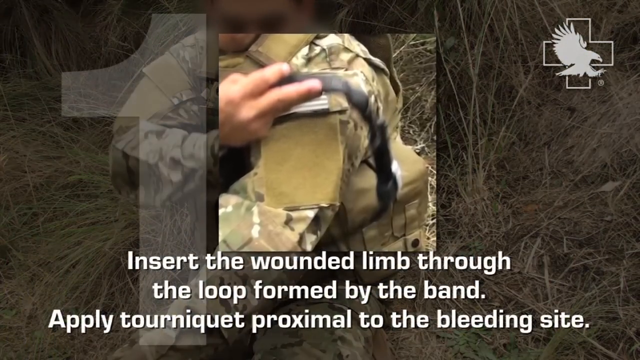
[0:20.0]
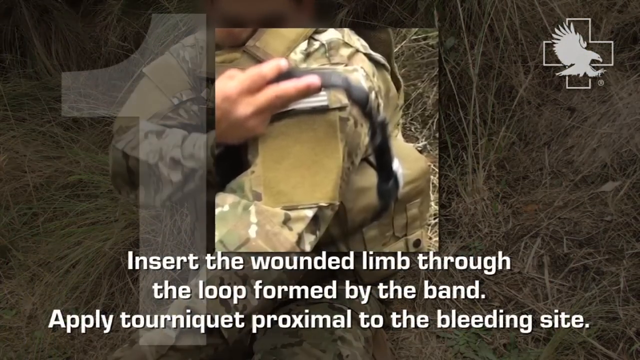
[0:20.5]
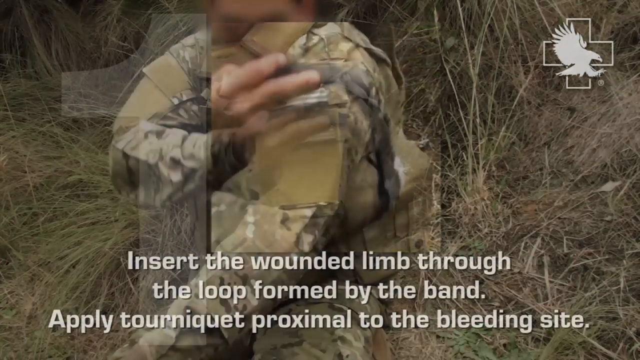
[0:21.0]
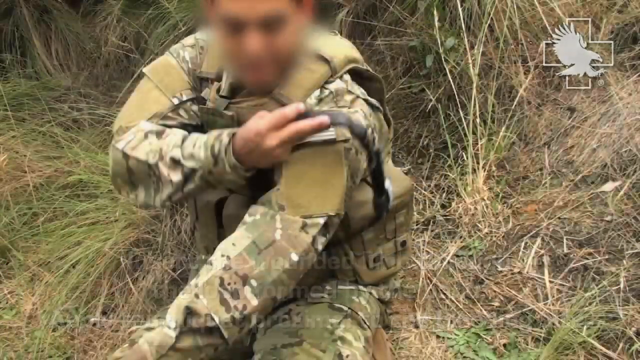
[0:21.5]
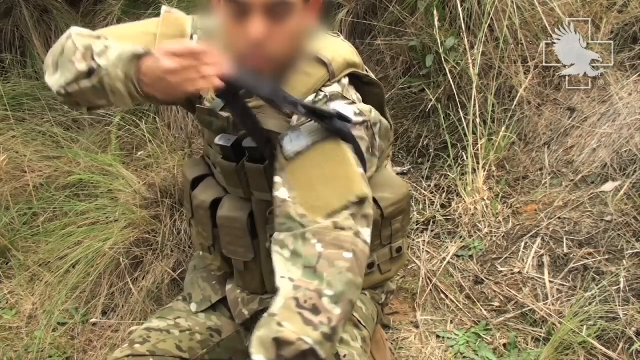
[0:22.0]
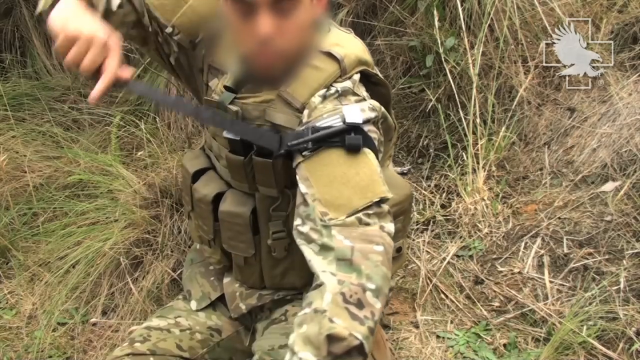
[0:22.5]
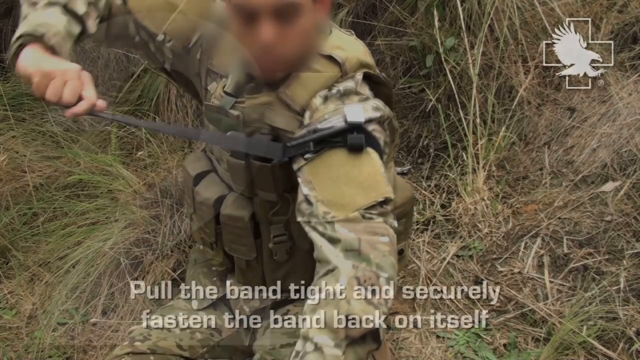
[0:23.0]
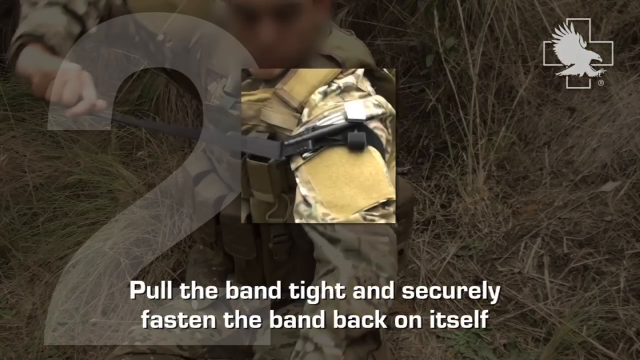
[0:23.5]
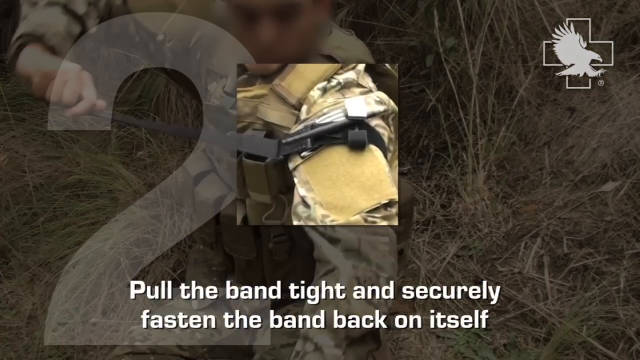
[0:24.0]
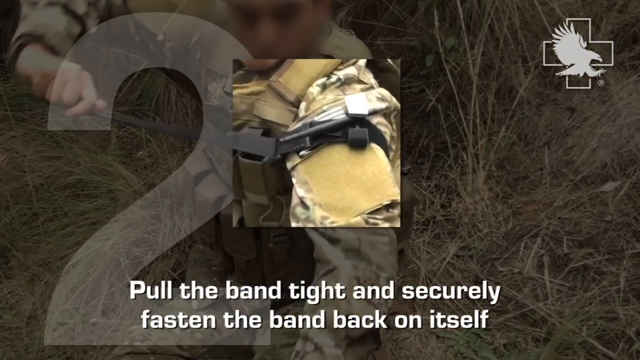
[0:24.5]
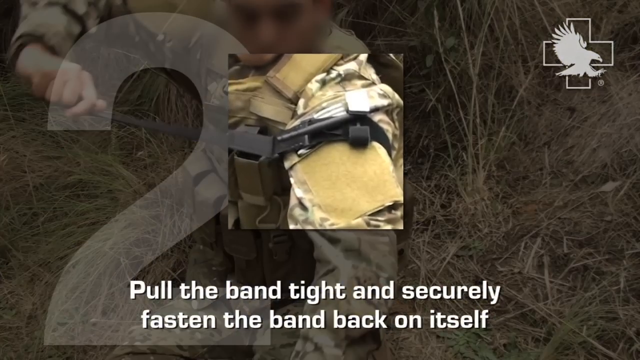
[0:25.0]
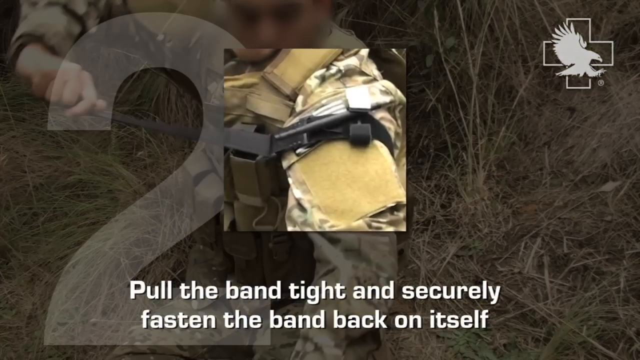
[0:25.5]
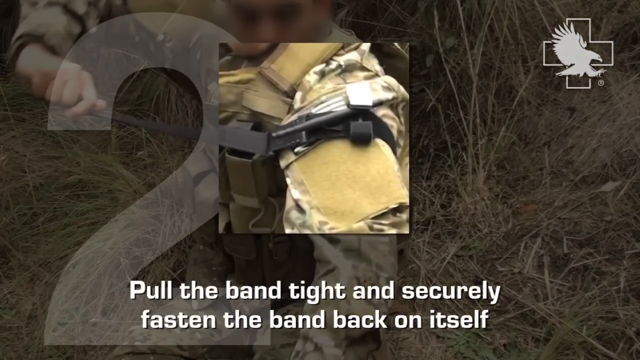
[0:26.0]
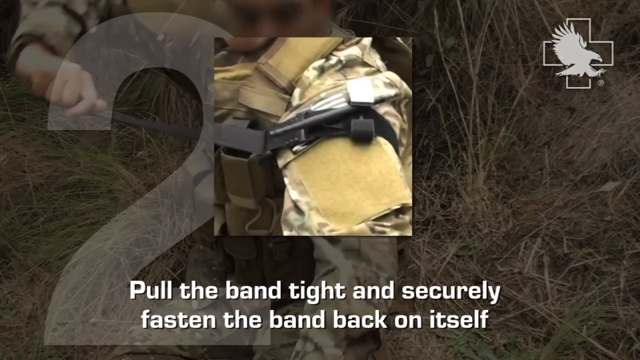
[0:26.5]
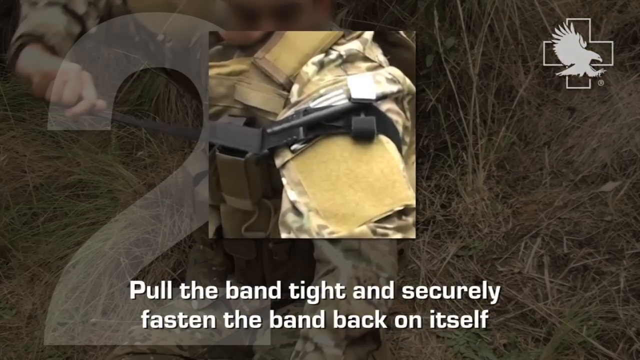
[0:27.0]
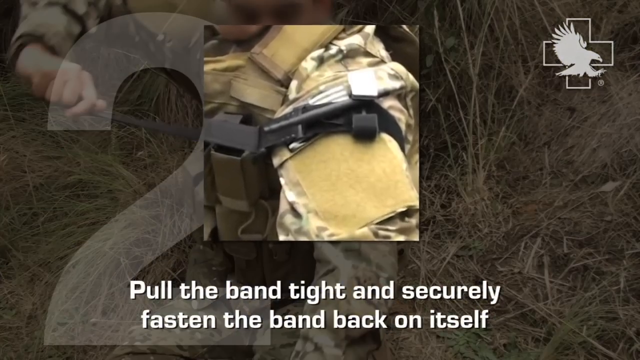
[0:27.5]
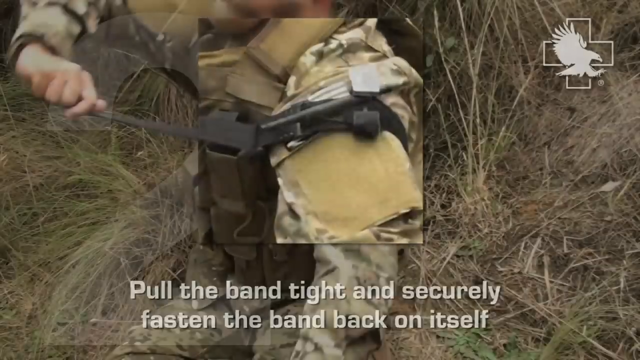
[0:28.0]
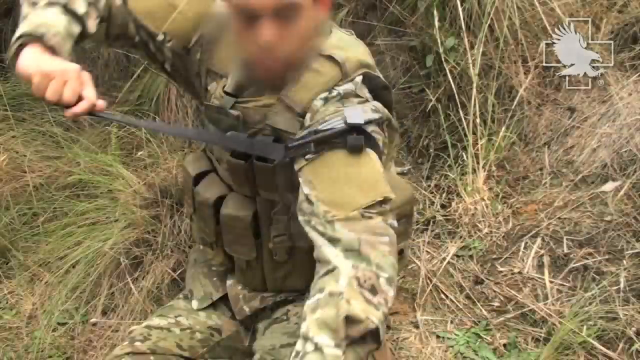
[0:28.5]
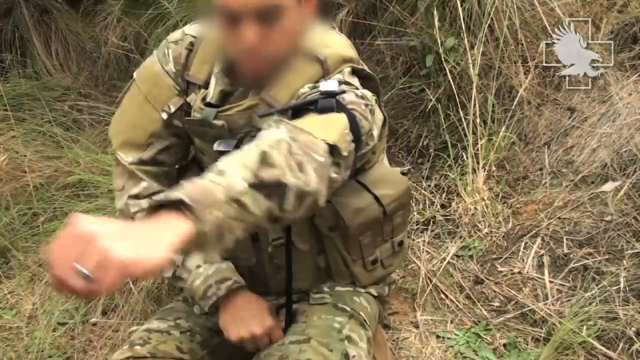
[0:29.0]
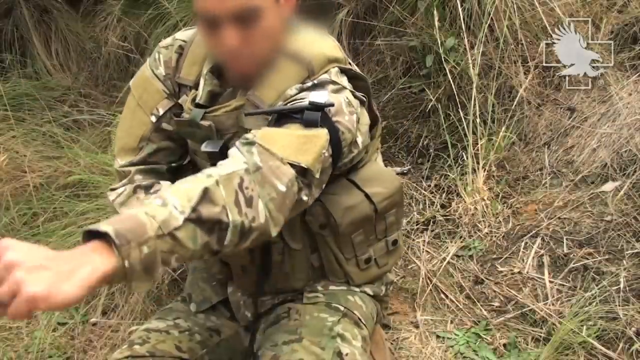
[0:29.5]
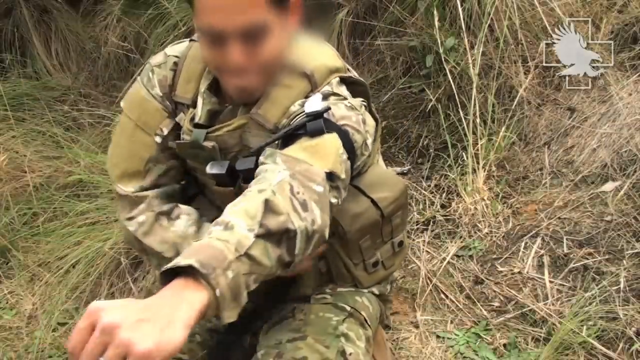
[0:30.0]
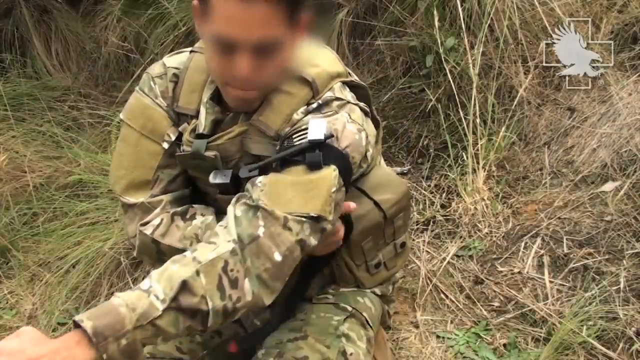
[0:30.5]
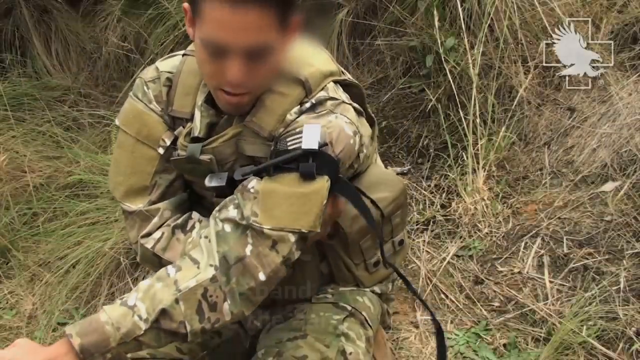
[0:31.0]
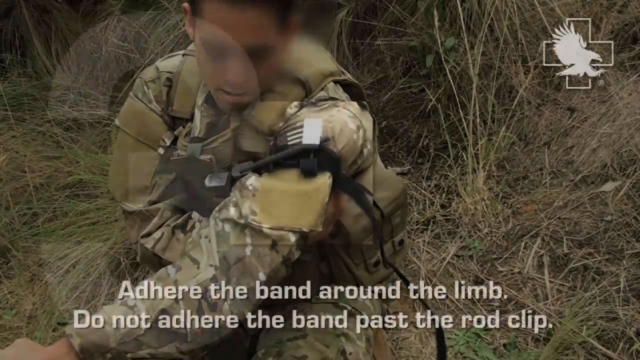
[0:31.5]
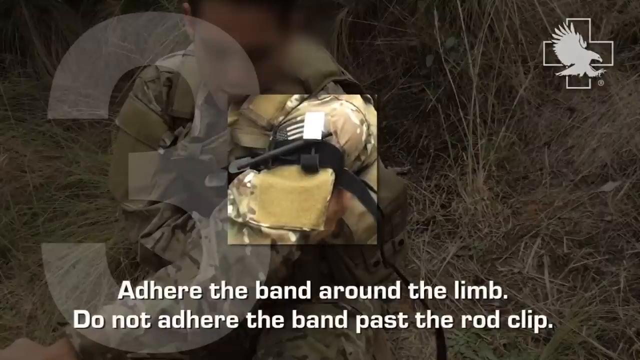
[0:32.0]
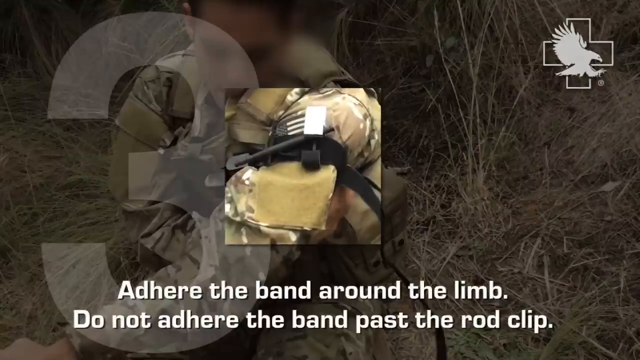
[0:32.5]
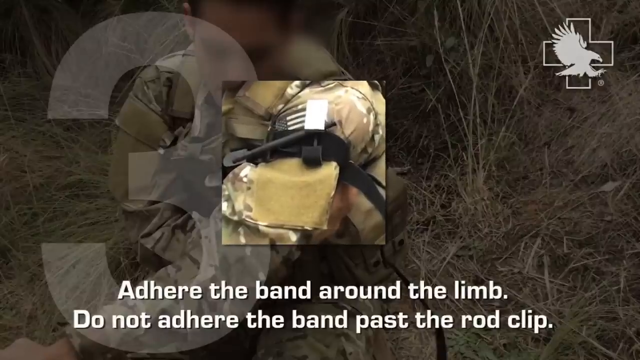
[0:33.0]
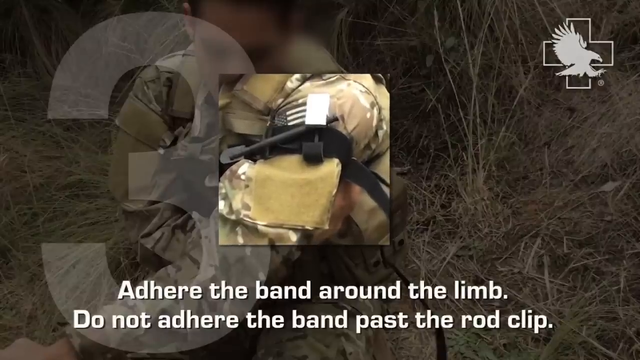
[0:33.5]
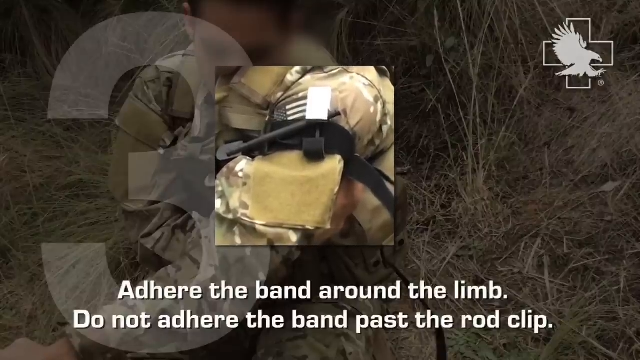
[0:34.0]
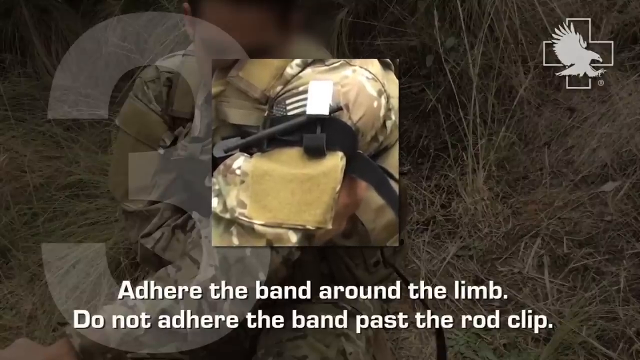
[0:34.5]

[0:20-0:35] Step 1 shows how to get a black tourniquet-type device over someone's arm. Text reads "pull the band tight and securely fasten the band back on itself", which is step 2. He then wraps the band around himself, which is step 3; there is apparently a rod on the device.